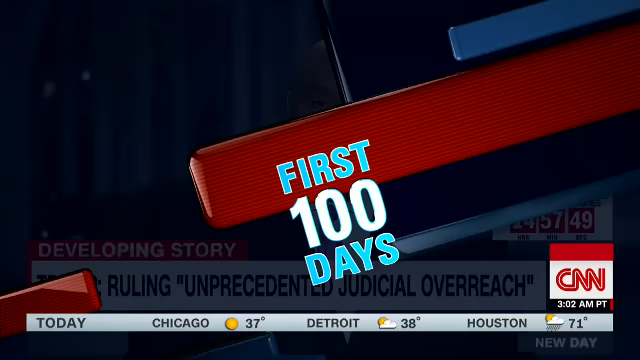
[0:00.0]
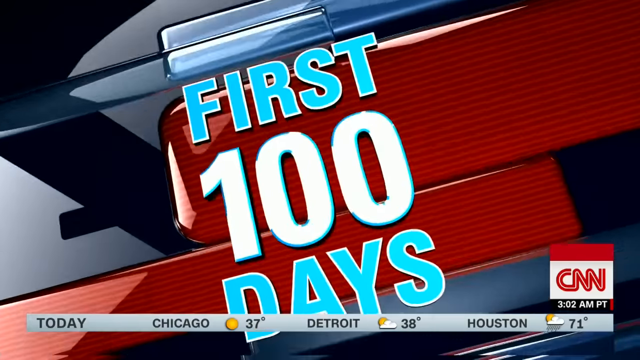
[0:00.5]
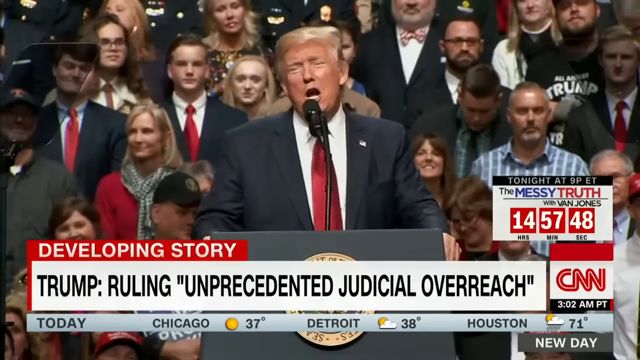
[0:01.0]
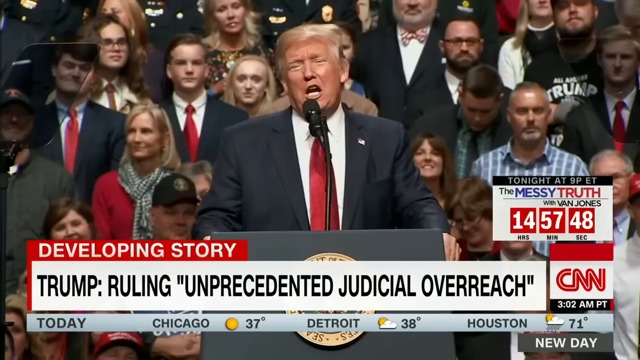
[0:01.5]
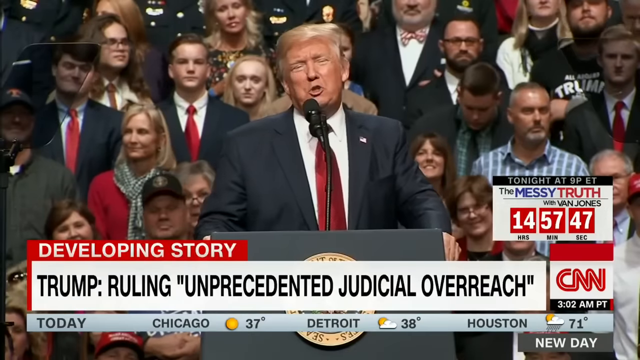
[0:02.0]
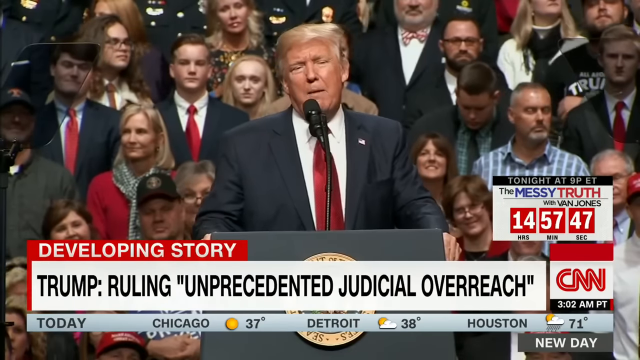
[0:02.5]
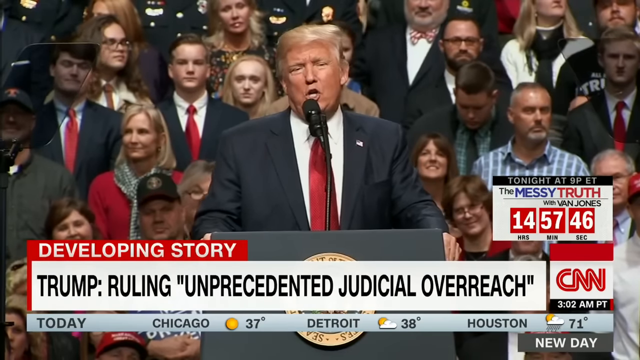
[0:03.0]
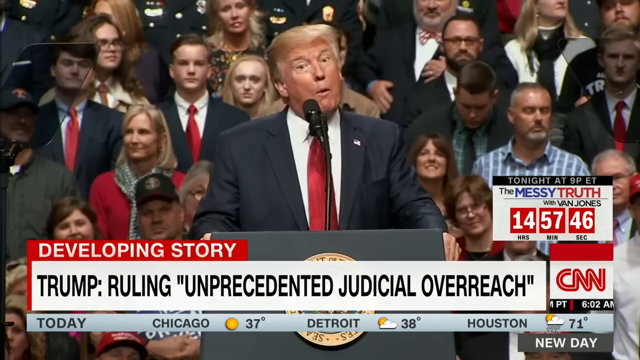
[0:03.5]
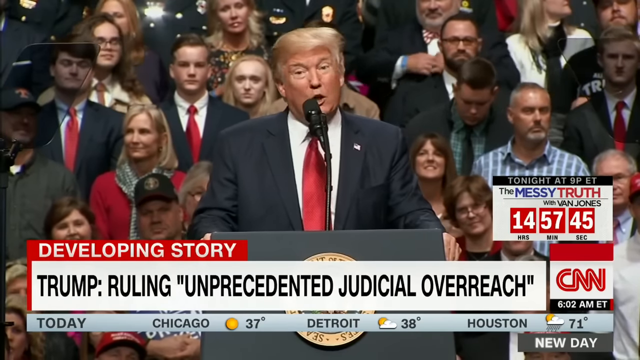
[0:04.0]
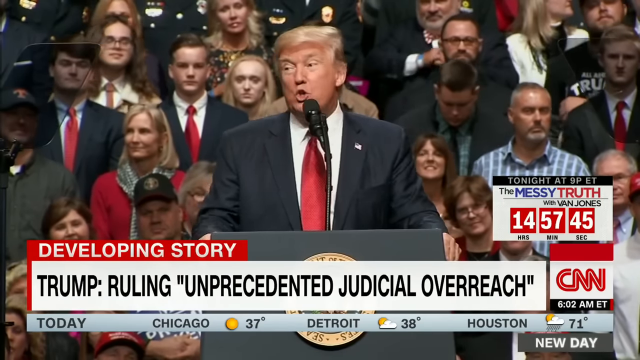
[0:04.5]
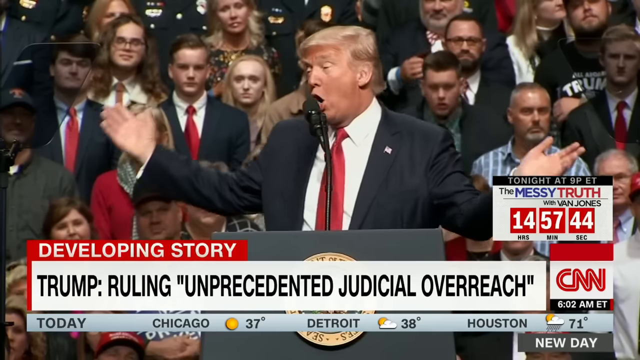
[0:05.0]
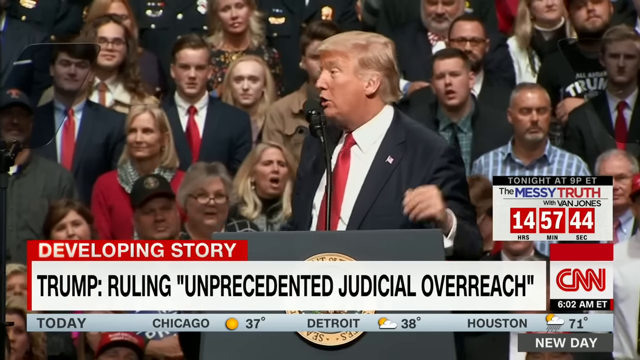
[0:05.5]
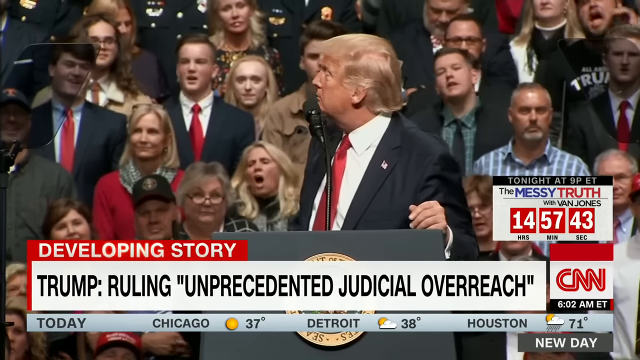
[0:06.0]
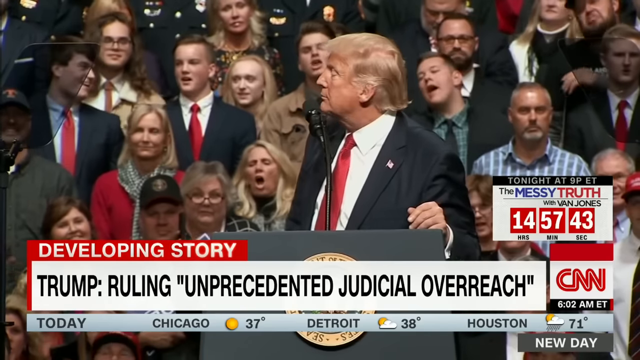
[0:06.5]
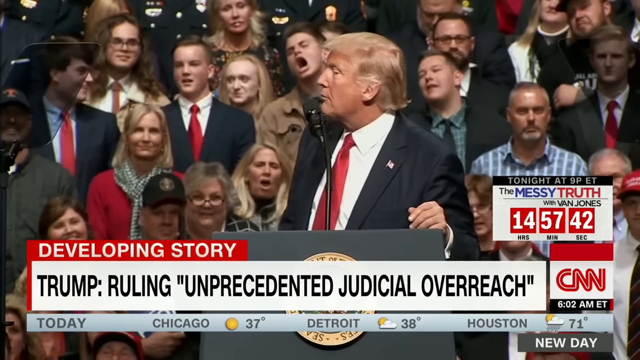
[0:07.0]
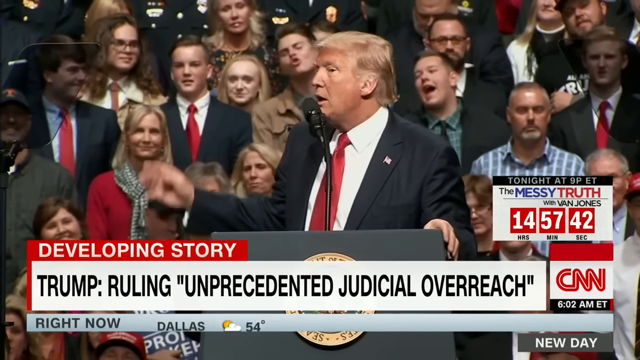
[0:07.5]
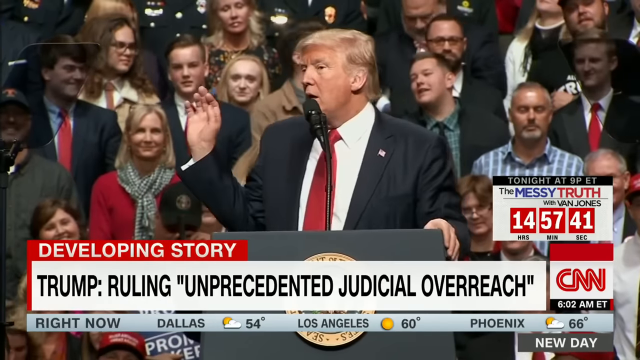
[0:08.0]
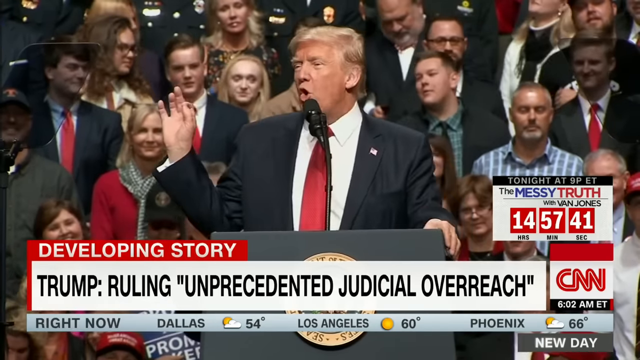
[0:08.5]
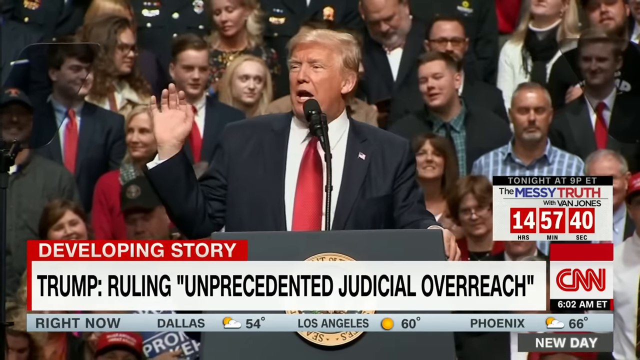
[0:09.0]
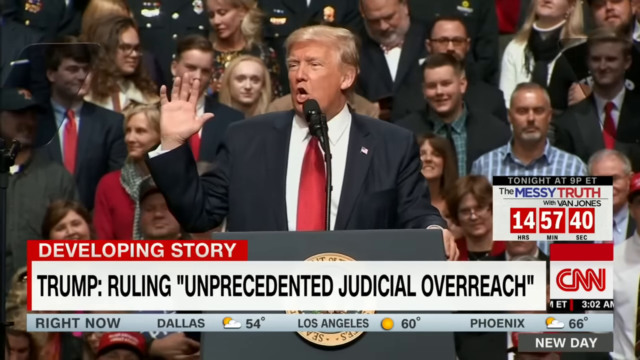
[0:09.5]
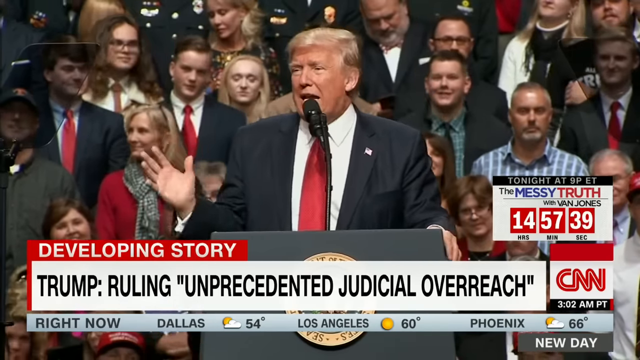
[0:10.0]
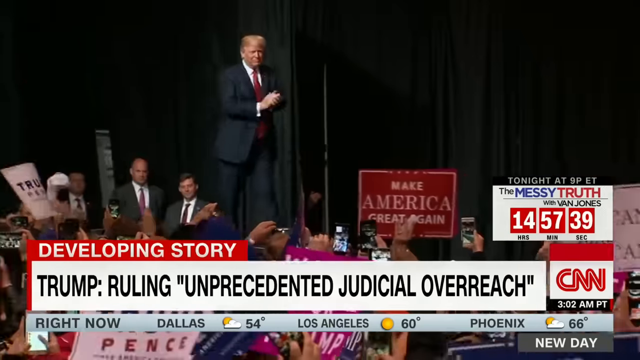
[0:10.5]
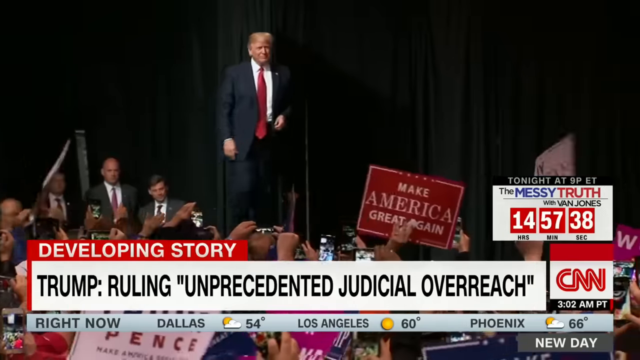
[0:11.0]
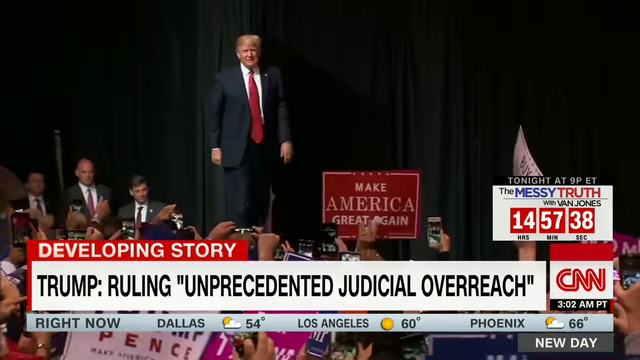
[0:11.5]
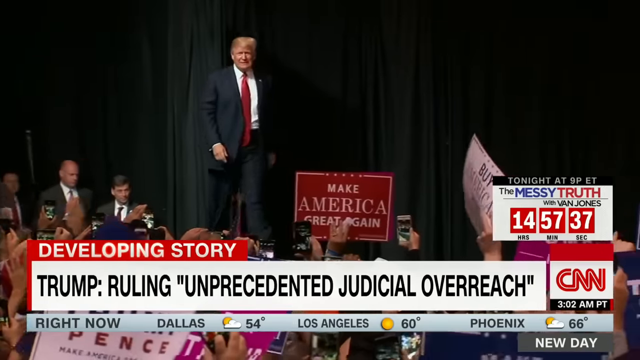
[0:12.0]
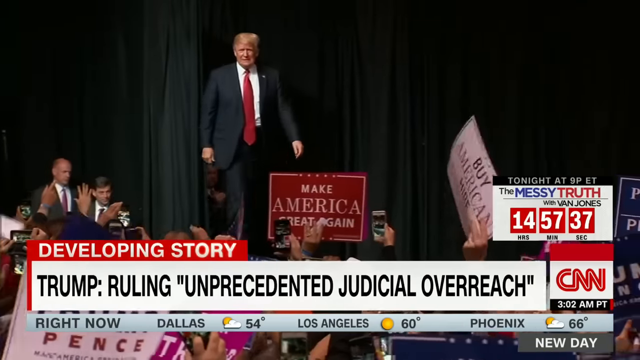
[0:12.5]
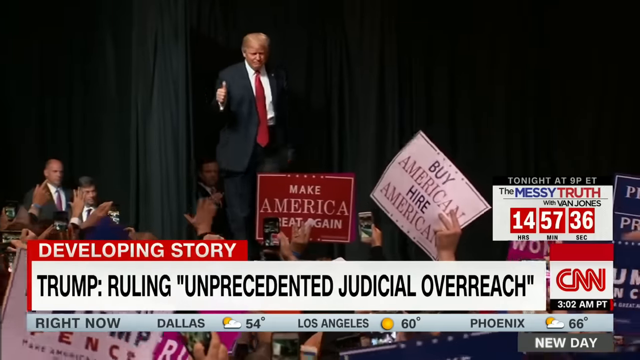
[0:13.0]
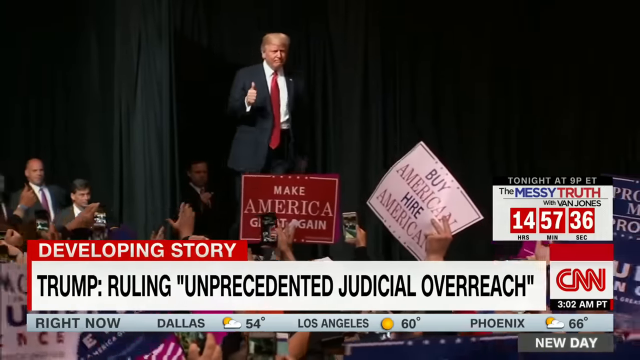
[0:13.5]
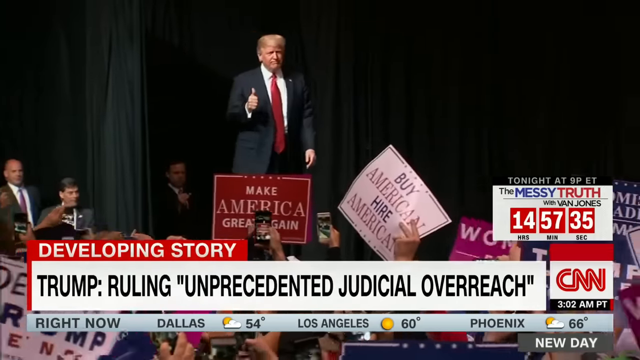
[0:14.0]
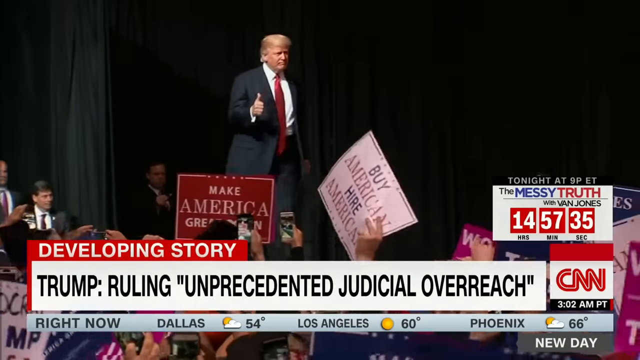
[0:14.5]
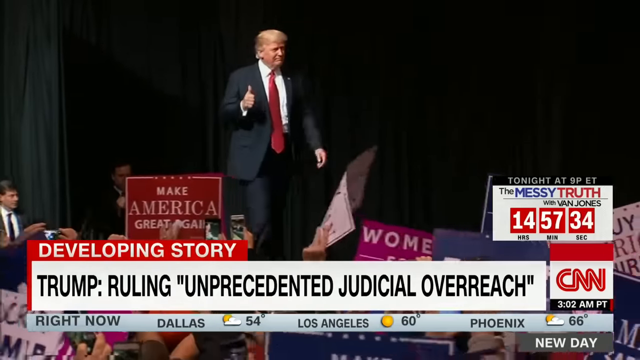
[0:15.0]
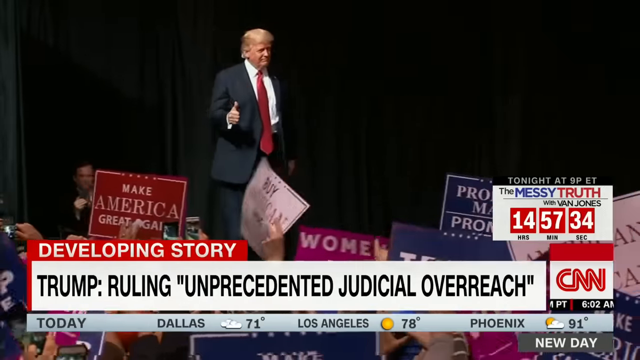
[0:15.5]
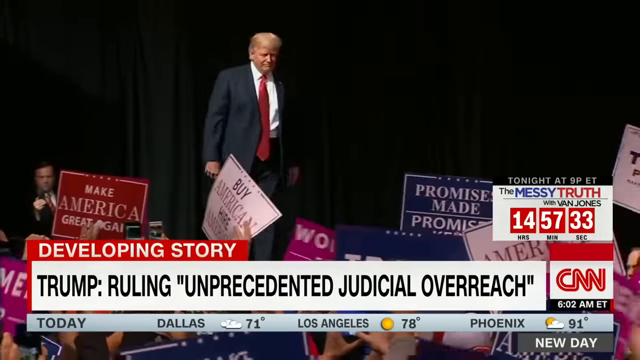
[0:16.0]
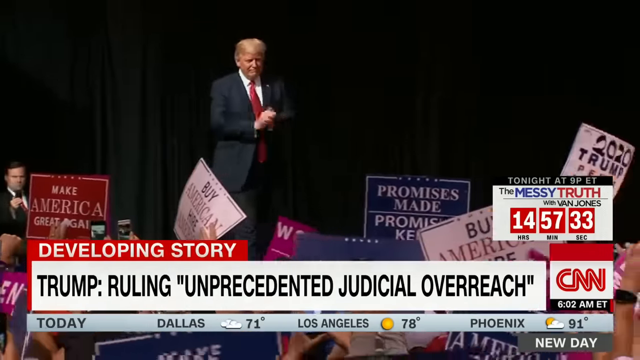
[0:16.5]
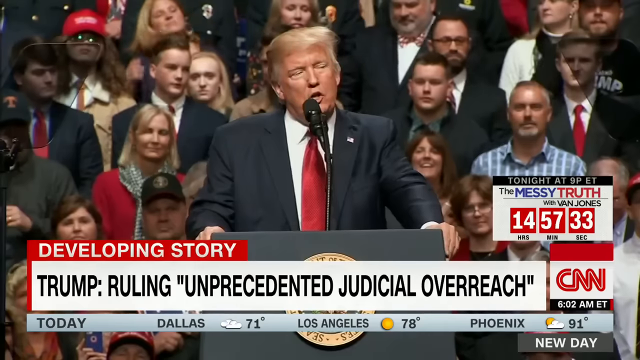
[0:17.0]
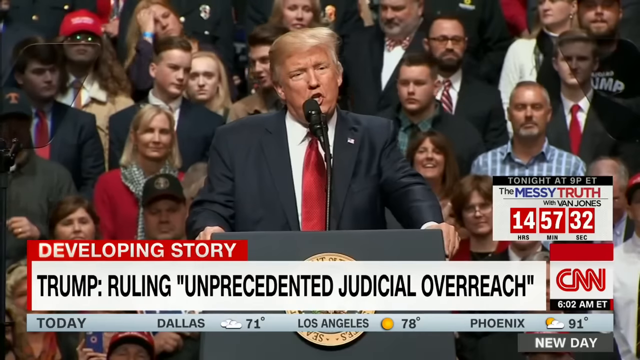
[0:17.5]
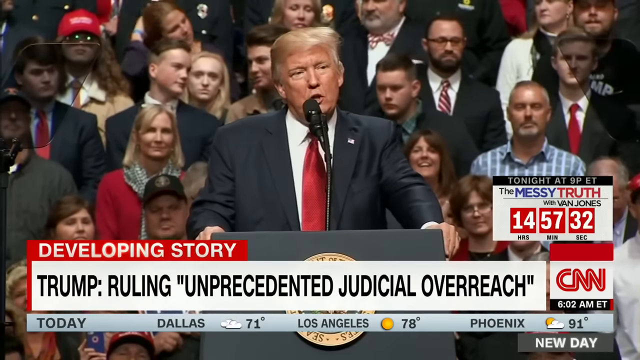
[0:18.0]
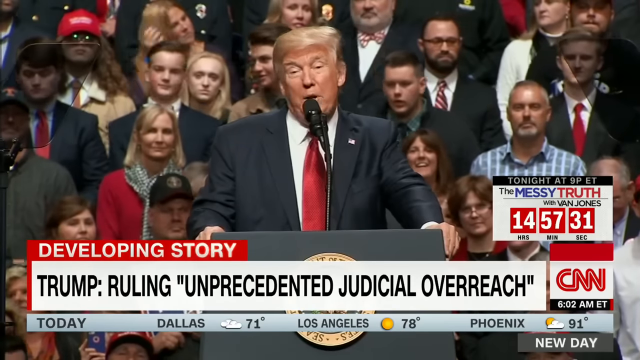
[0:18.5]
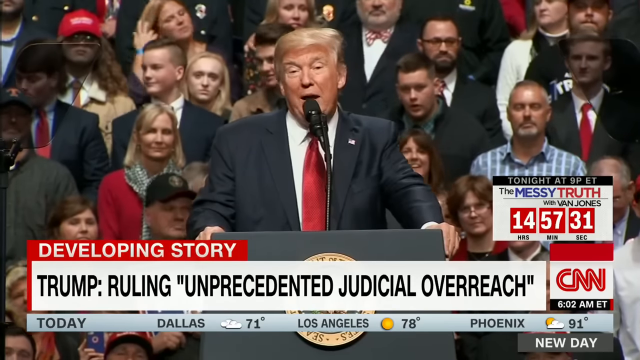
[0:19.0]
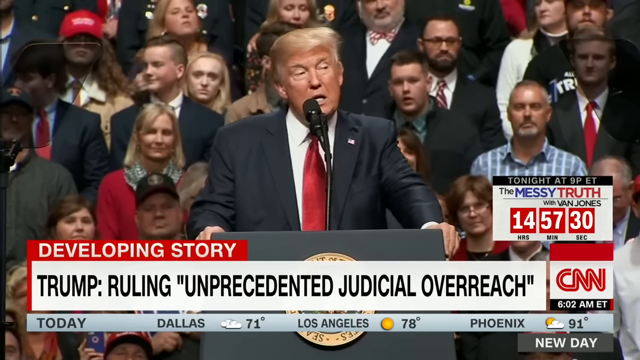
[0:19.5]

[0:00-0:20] Donald Trump, wearing a black suit, a white button-down shirt and a red tie with an American flag pin on his lapel, stands in front of a lectern with a microphone in his face and speaks. He has blonde hair and a tan face. Behind him are his supporters, many of whom are also saying things enthusiastically as he speaks, their lips moving with enthusiasm. A caption on the screen reads "Trump ruling unprecedented judicial overreach." Next, Trump walks down a stage, waving at people and extending his hand as if to shake their hands, but he doesn't; instead he puts his thumb up in a thumbs-up gesture. People hold signs that say "Make America Great Again."